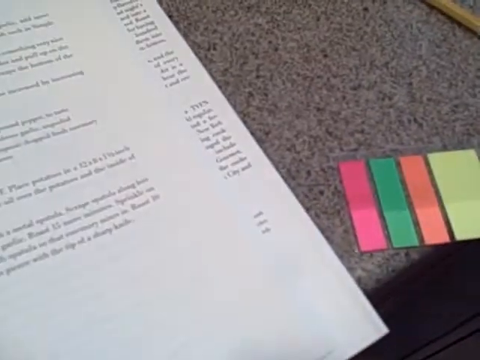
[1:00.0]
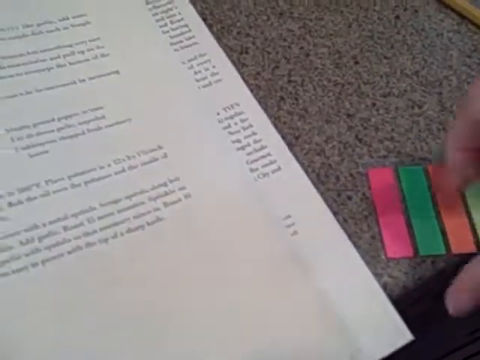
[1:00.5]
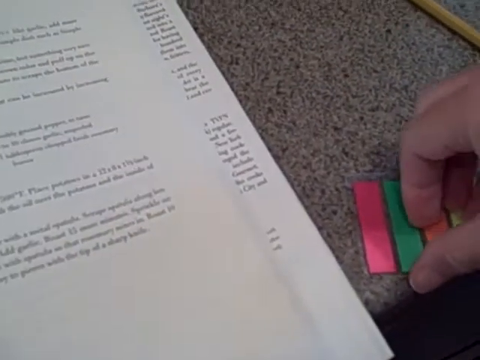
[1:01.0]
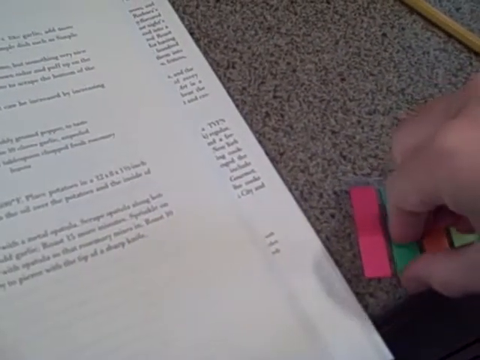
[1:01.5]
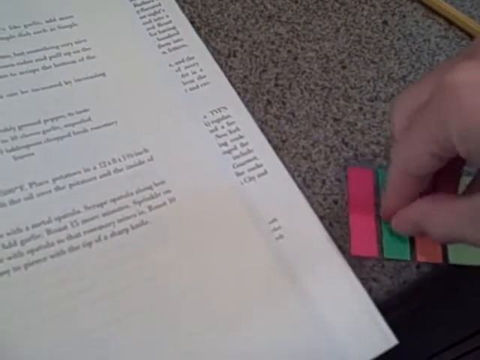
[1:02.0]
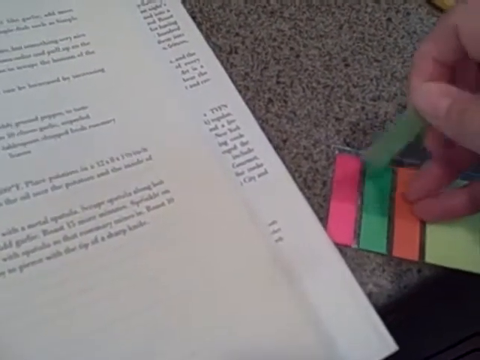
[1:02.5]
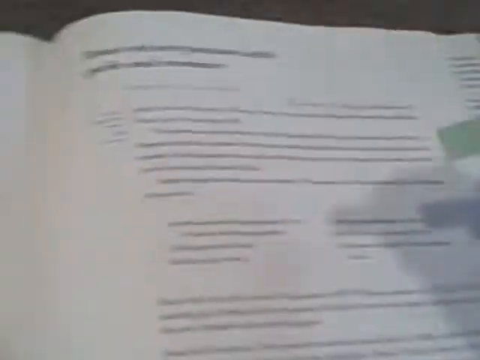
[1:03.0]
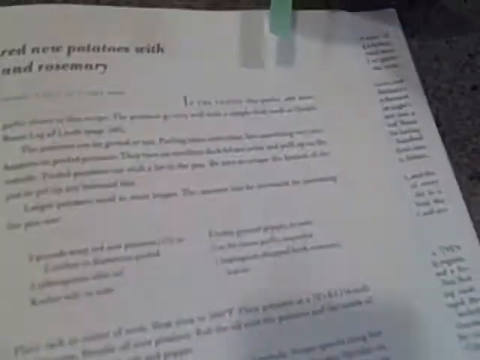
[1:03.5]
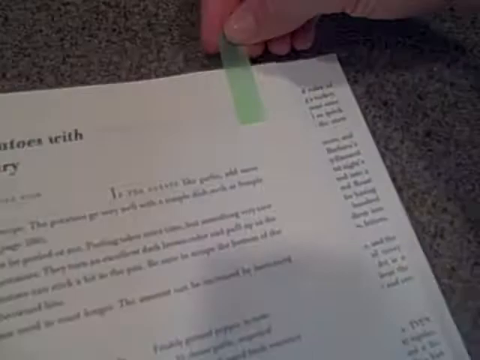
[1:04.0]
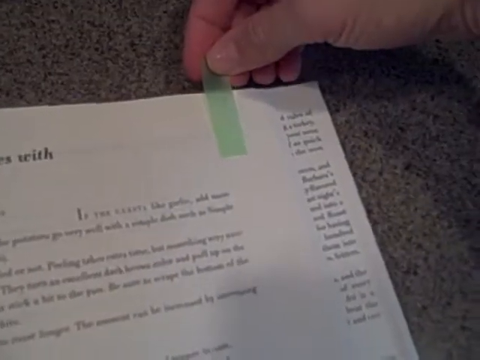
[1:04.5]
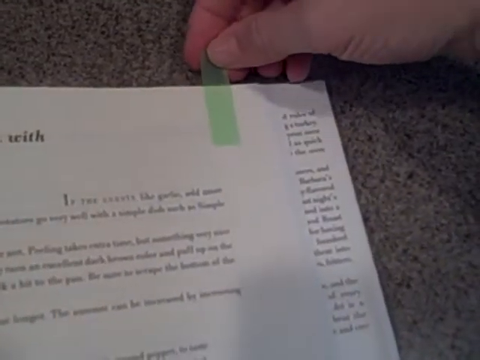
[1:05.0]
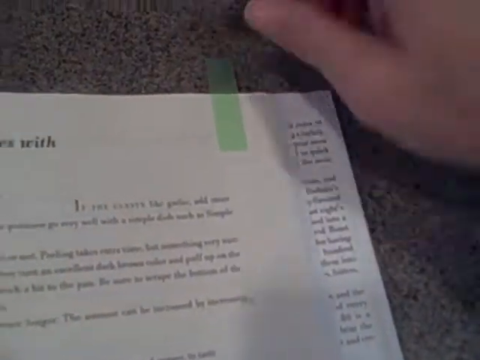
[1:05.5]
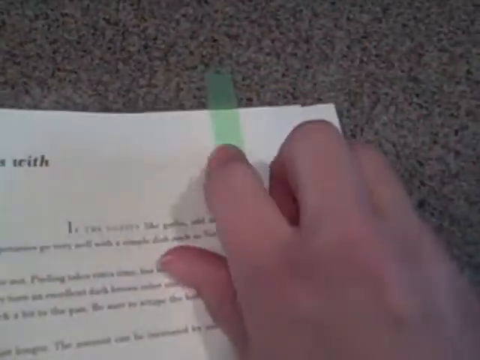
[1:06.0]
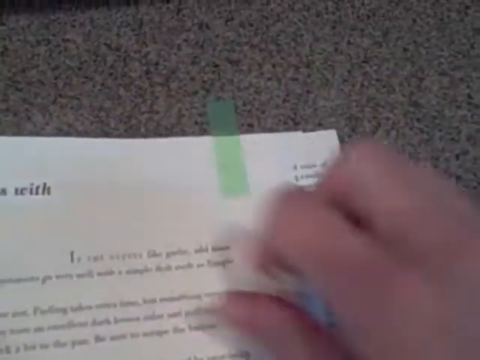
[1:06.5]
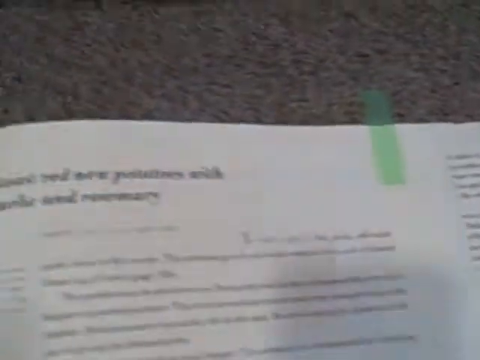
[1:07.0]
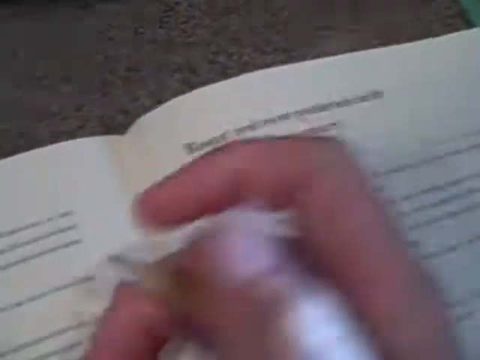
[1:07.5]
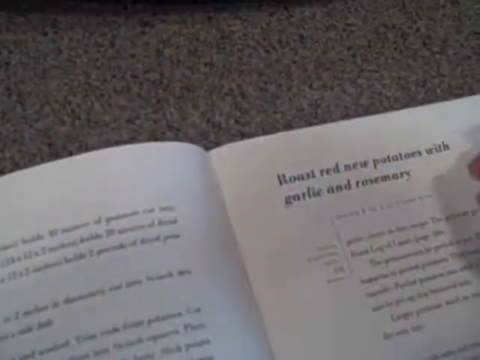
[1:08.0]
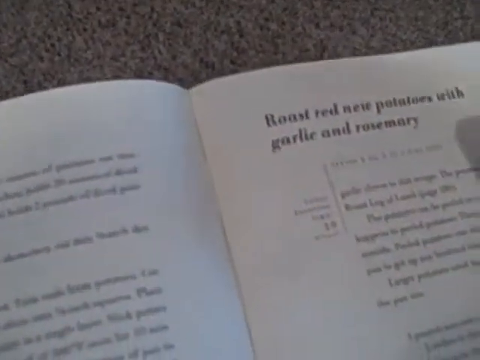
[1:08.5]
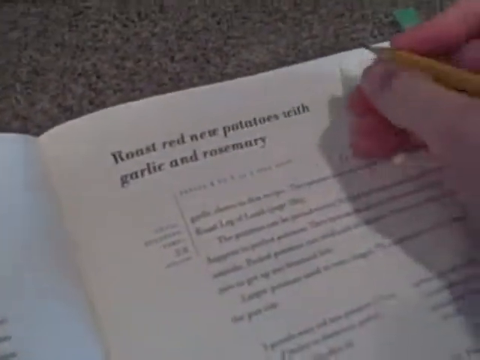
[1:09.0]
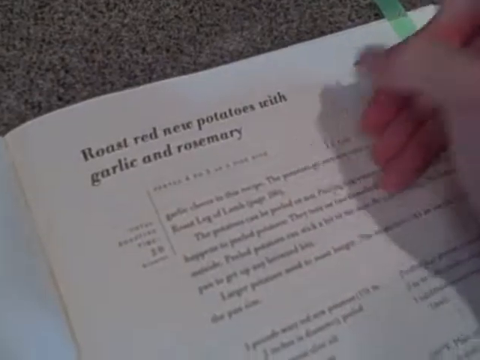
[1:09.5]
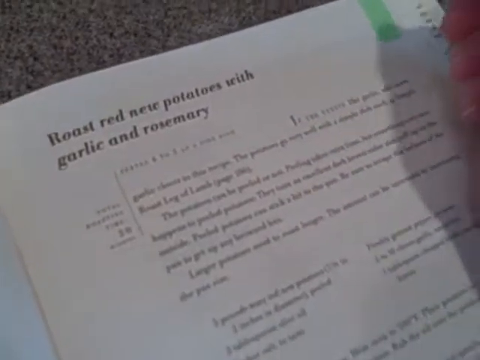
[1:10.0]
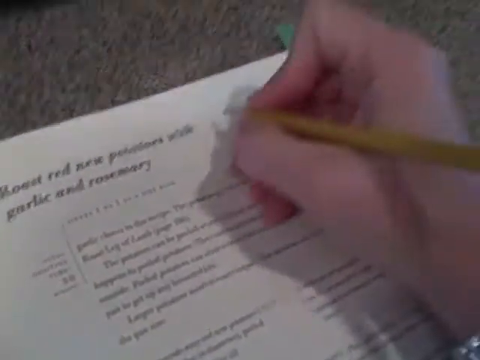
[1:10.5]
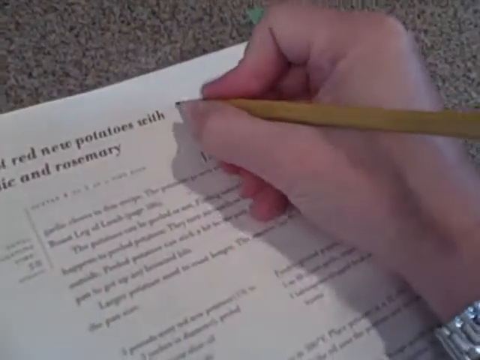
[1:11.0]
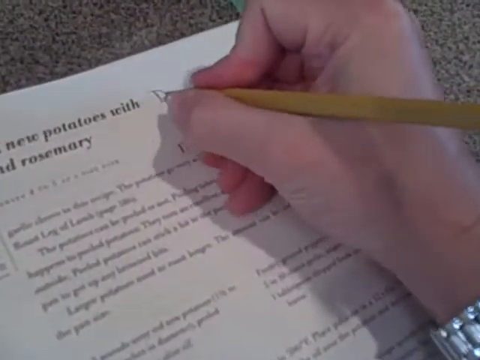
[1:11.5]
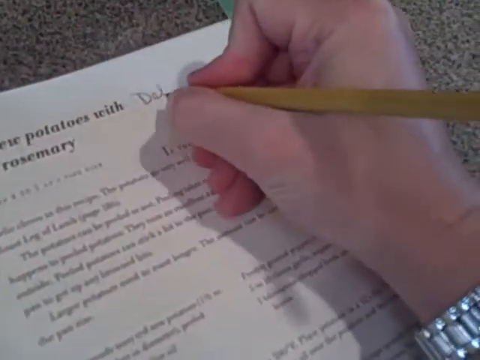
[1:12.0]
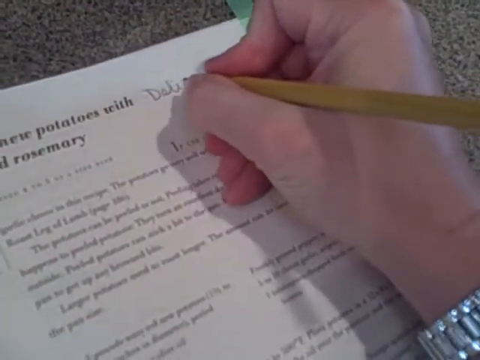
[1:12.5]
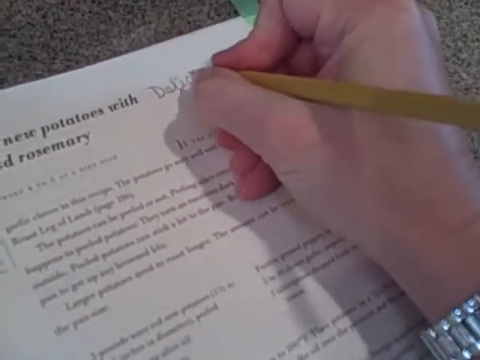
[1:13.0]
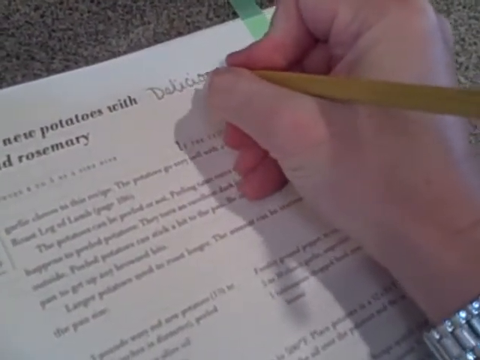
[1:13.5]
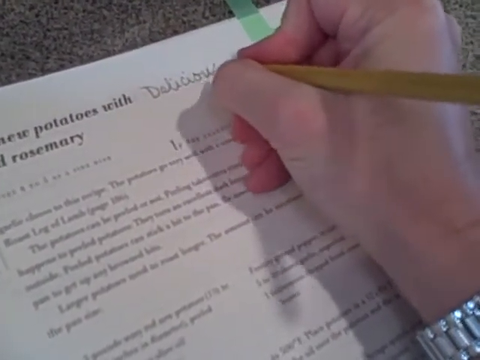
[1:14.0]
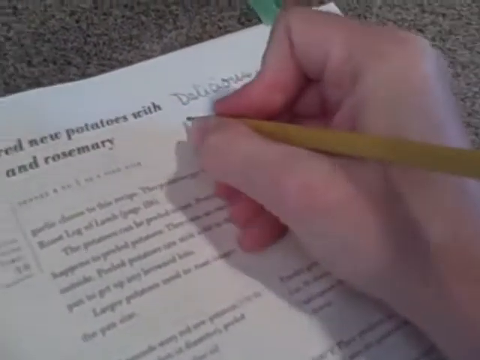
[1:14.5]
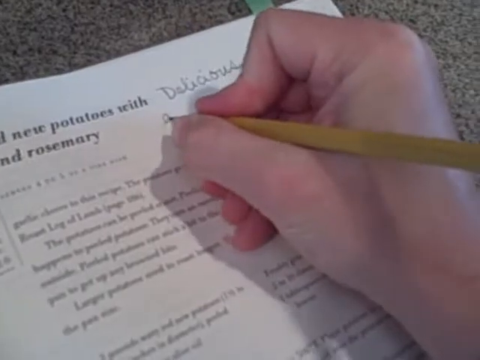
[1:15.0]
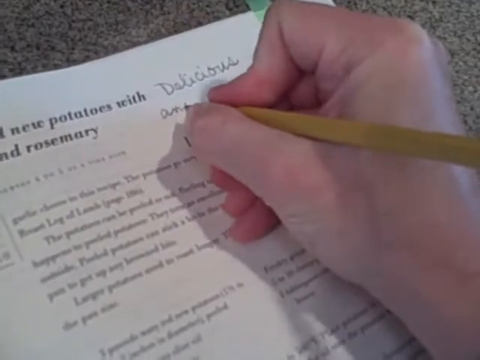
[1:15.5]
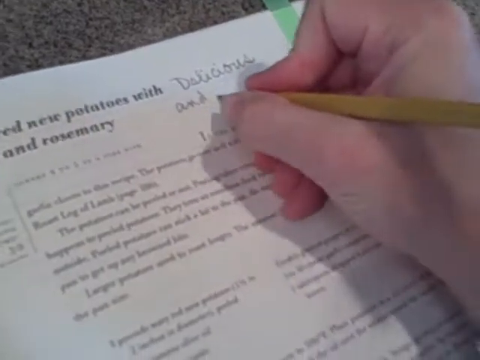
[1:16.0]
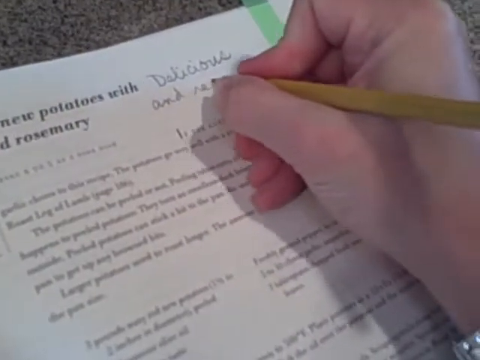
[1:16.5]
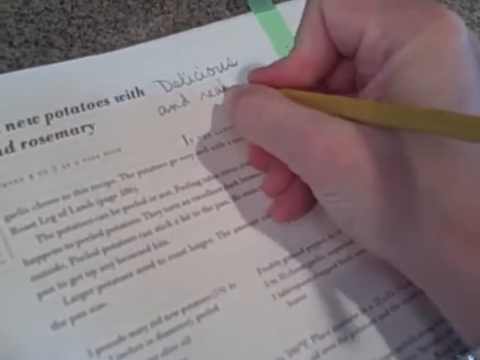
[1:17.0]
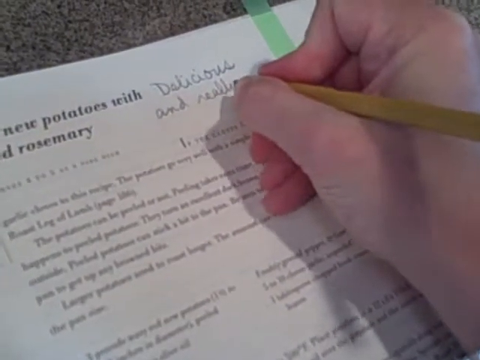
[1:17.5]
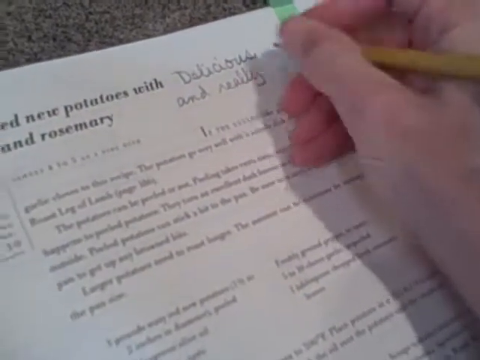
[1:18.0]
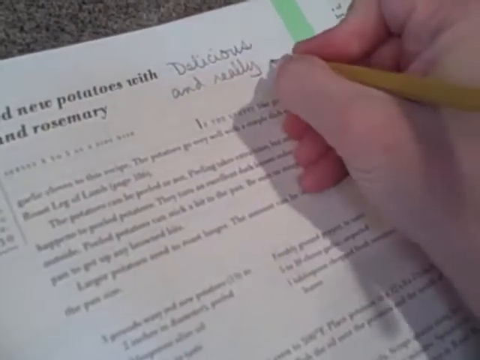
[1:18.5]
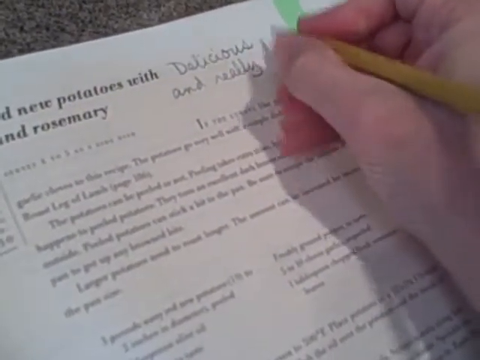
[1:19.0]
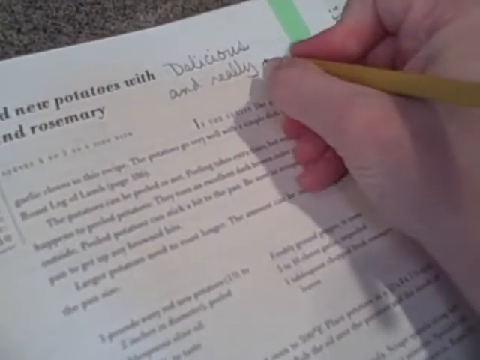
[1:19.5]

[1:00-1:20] The woman peels off the green highlighter and puts it at the top of the page like a bookmark. Using her right hand, she starts writing with a pencil at the top of the page, next to the recipe title, roast red new potatoes with garlic and rosemary. She writes "delicious" and "really", followed by what looks like a word starting with an E before the shot cuts. She wears a silver link chain watch on her wrist. It still looks to be daytime, with light in the background. The pencil is brown and brownish yellow, and she presses quite hard, writing dark marks directly into the recipe book.